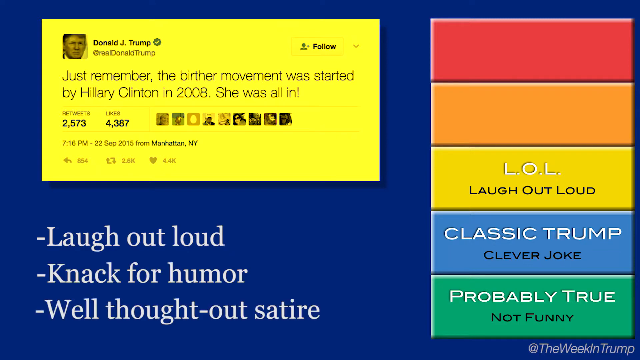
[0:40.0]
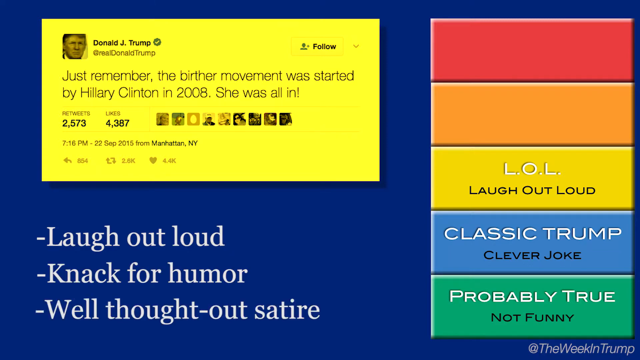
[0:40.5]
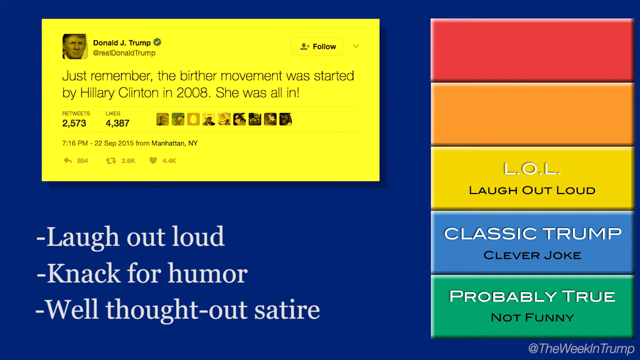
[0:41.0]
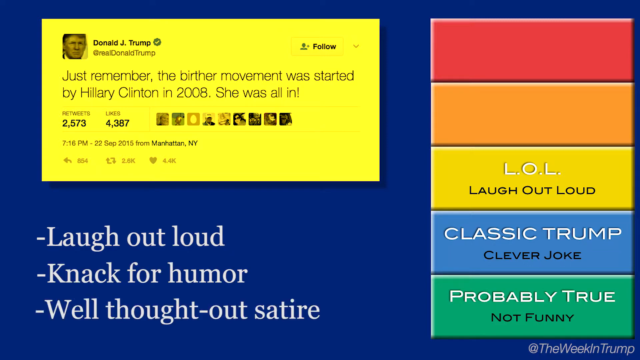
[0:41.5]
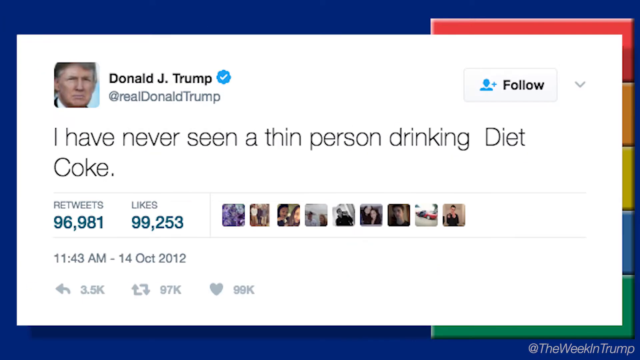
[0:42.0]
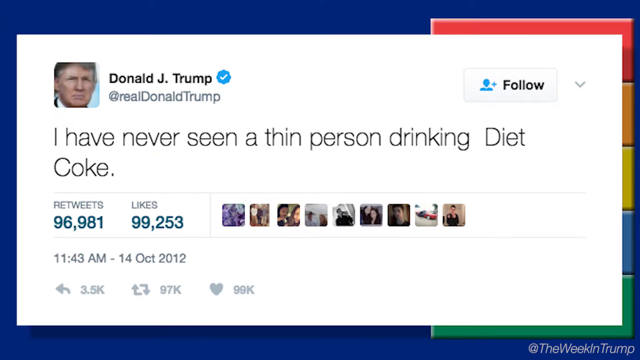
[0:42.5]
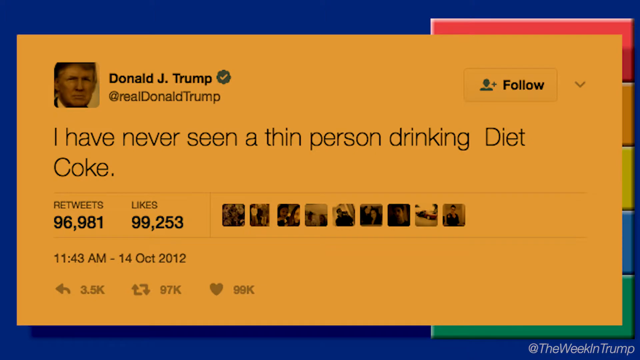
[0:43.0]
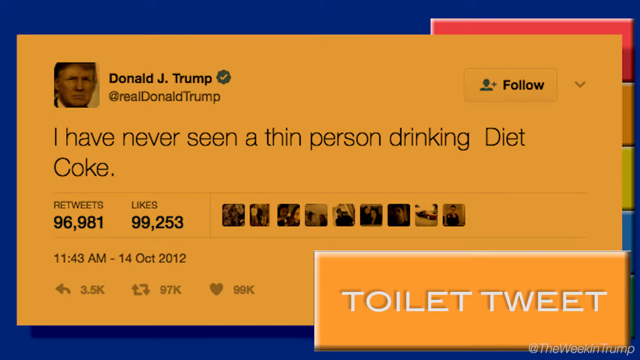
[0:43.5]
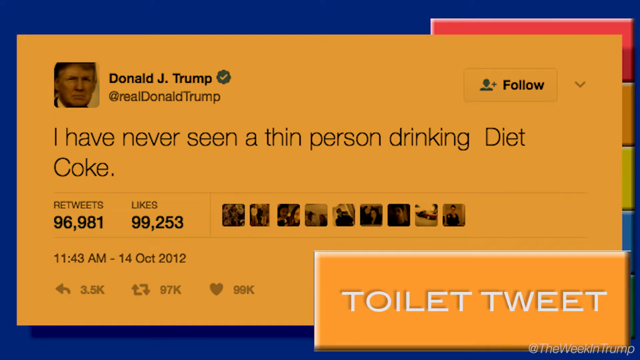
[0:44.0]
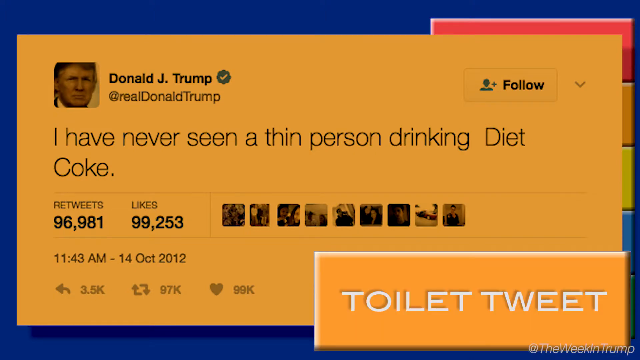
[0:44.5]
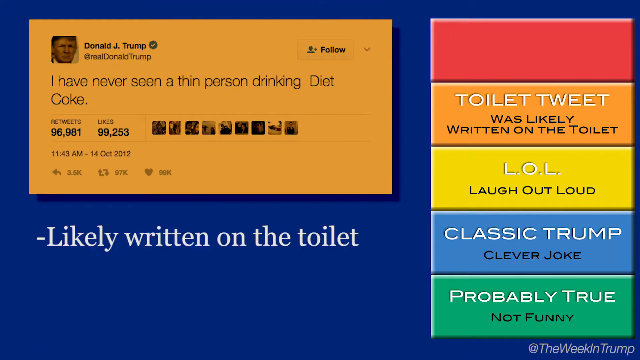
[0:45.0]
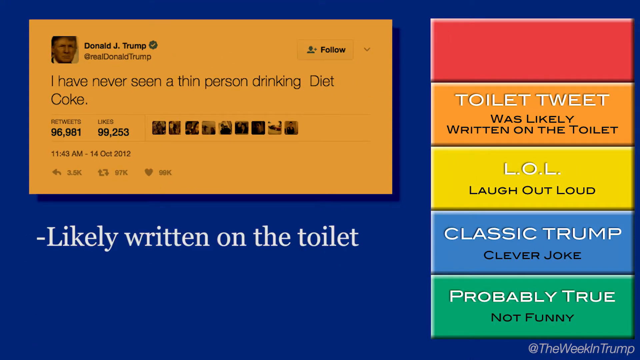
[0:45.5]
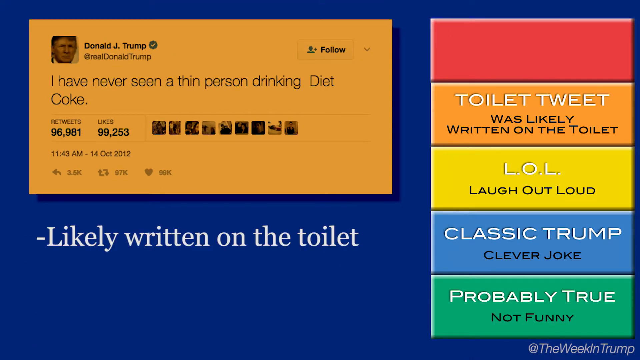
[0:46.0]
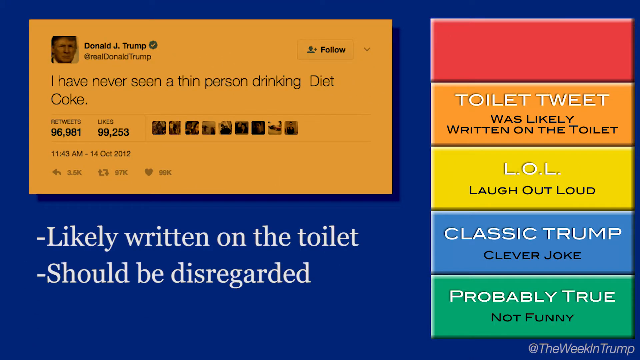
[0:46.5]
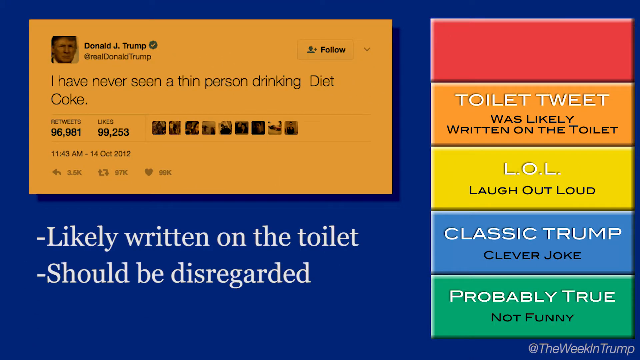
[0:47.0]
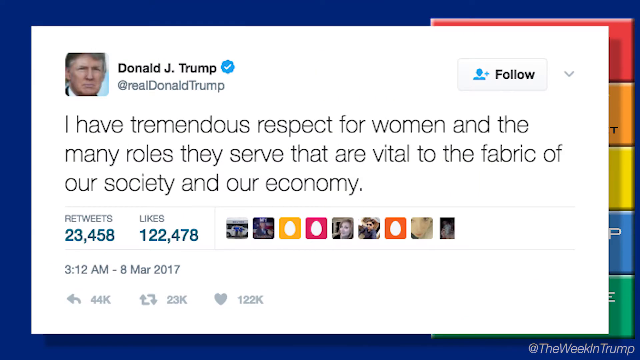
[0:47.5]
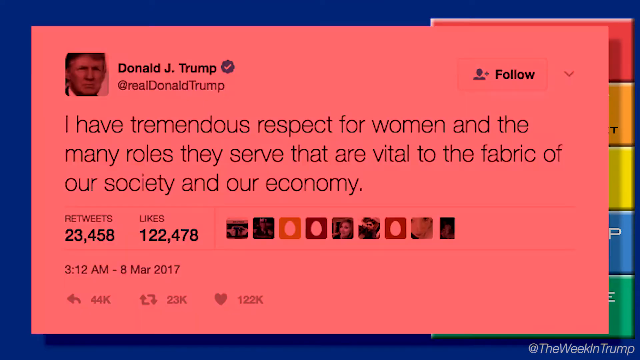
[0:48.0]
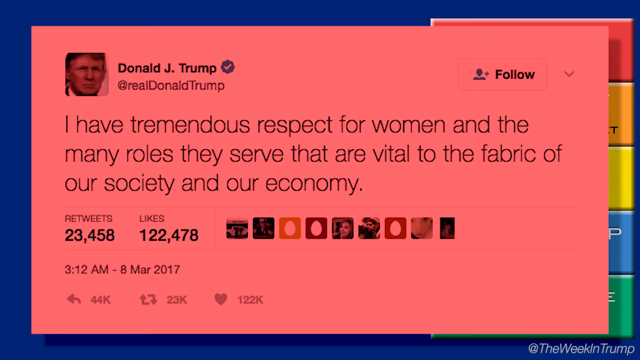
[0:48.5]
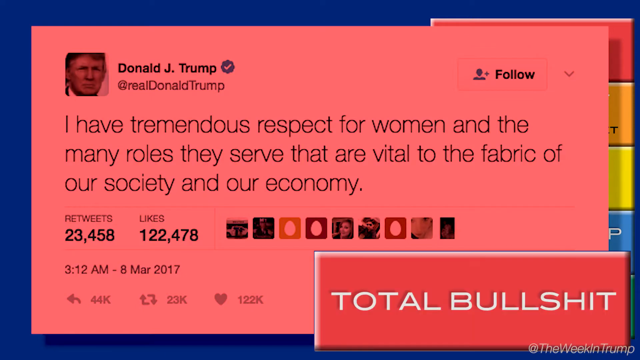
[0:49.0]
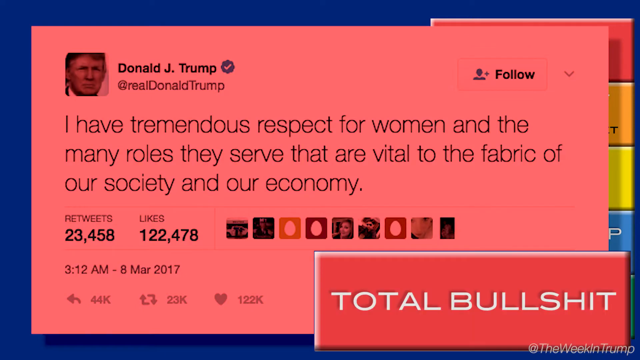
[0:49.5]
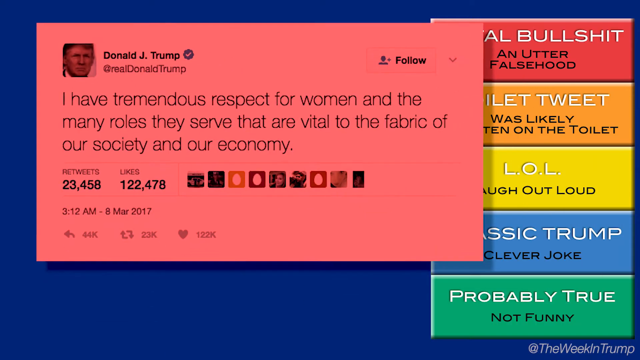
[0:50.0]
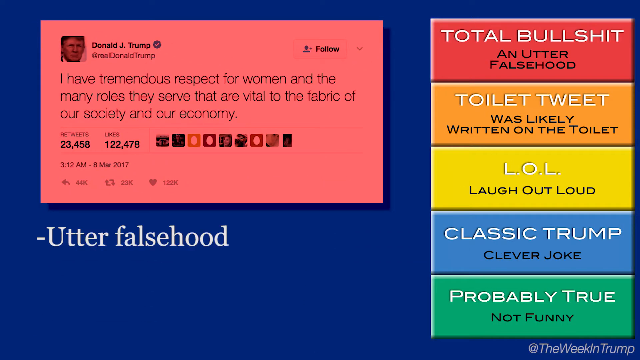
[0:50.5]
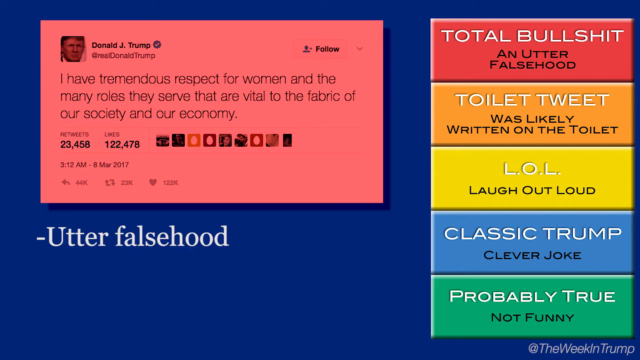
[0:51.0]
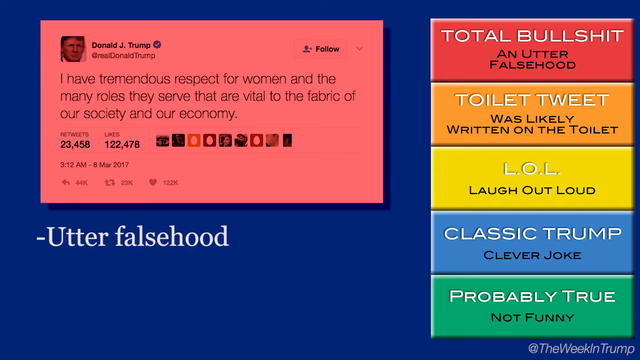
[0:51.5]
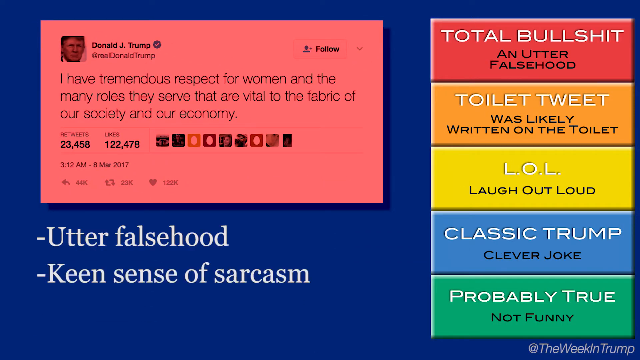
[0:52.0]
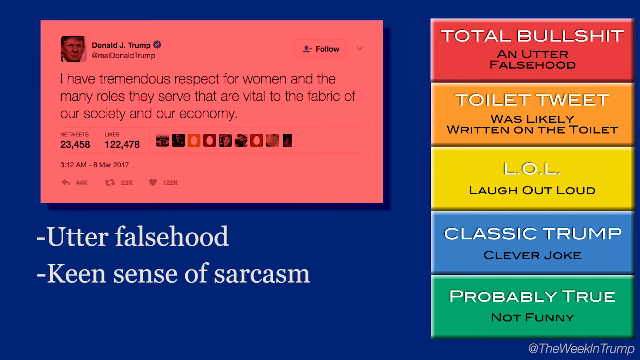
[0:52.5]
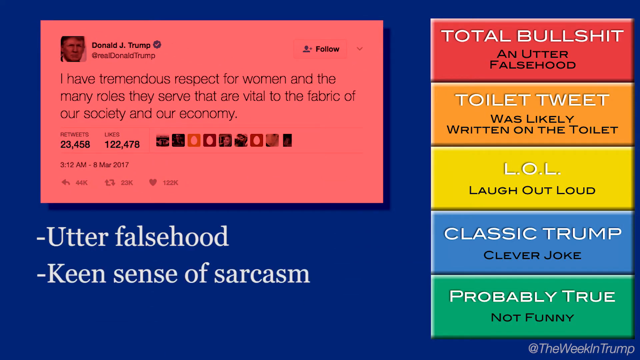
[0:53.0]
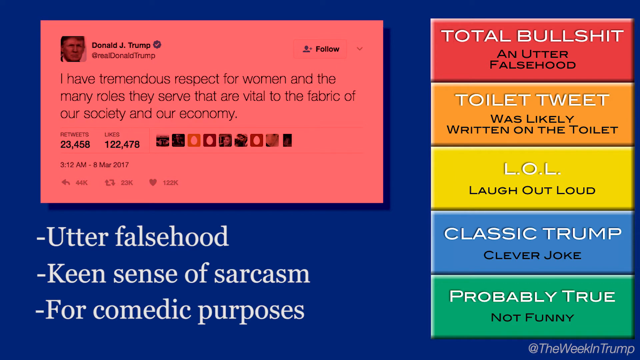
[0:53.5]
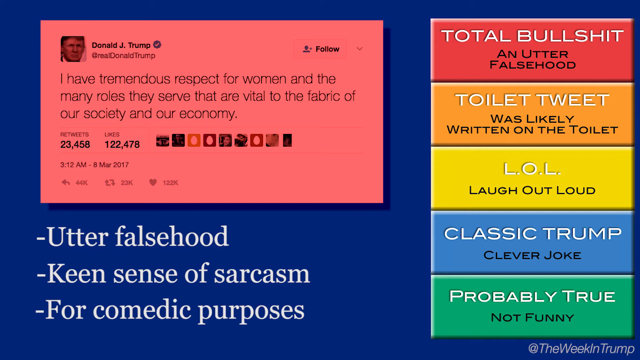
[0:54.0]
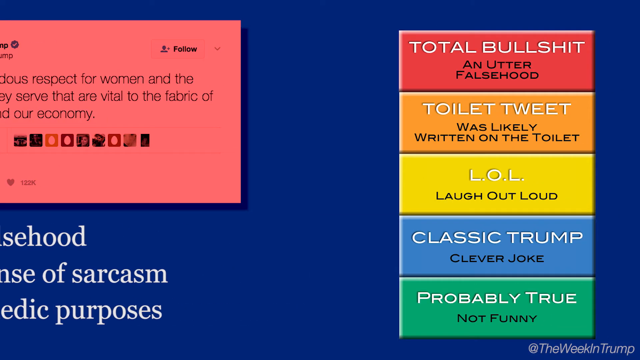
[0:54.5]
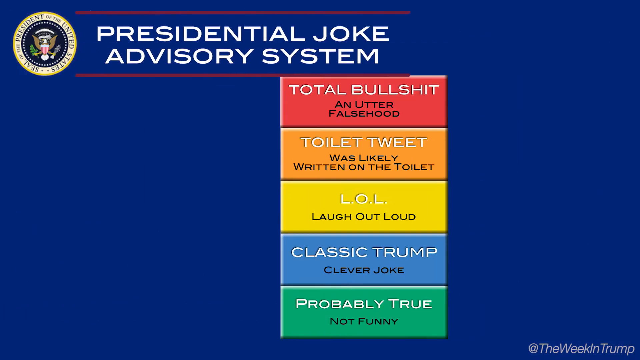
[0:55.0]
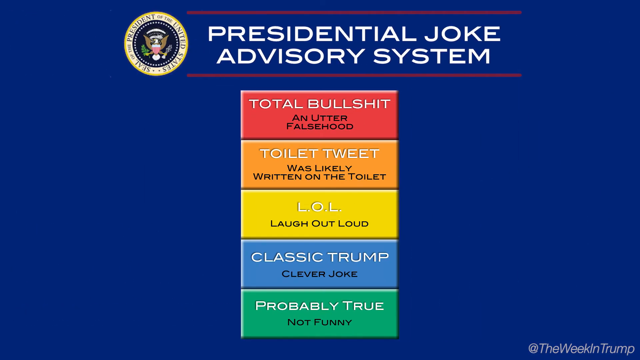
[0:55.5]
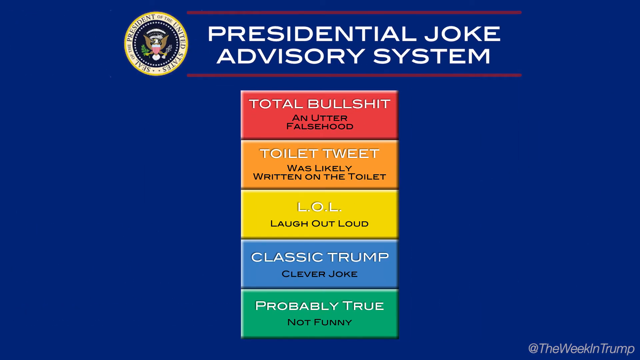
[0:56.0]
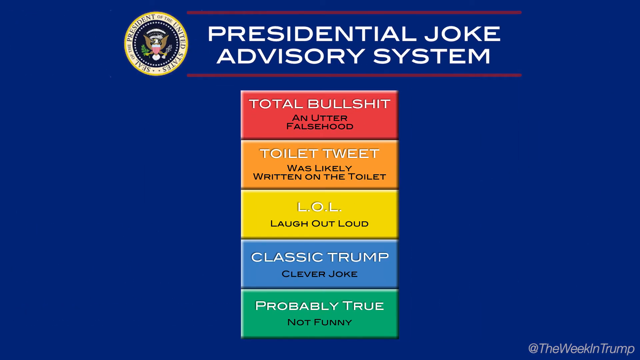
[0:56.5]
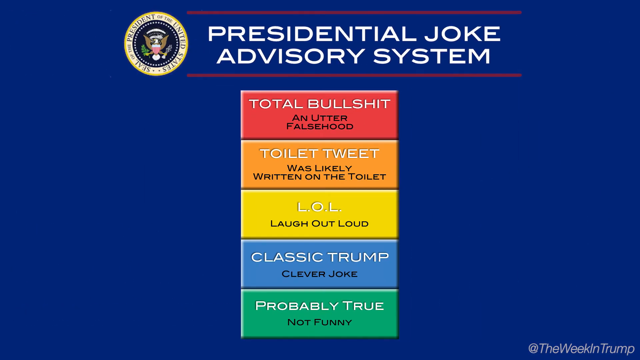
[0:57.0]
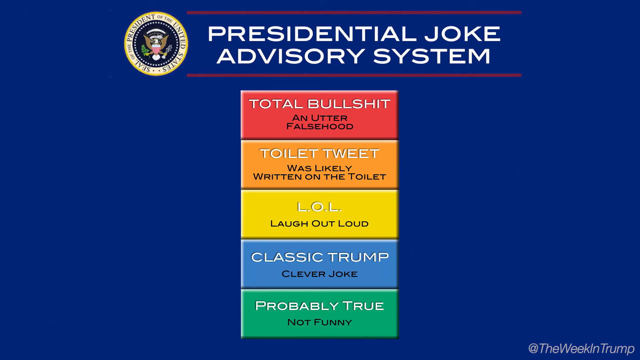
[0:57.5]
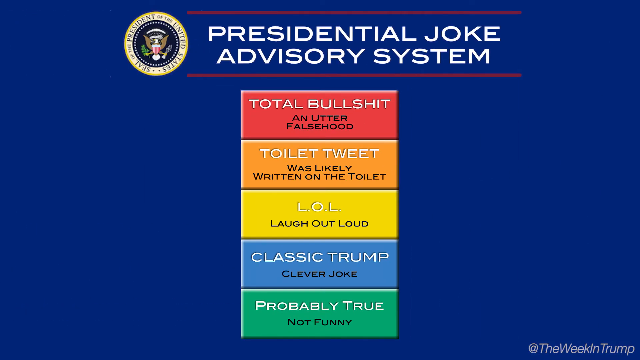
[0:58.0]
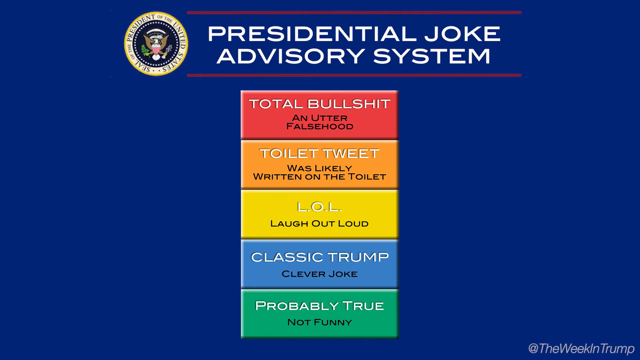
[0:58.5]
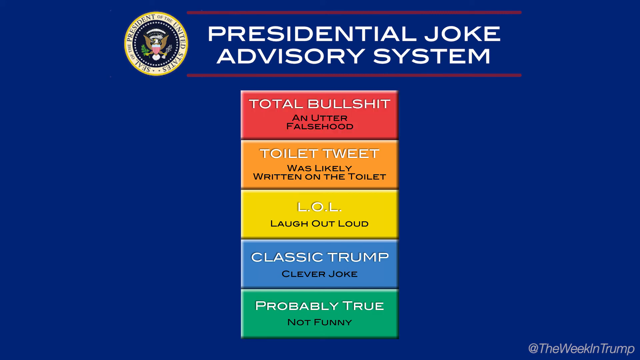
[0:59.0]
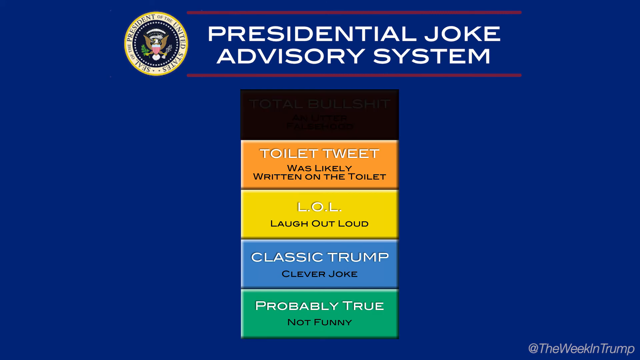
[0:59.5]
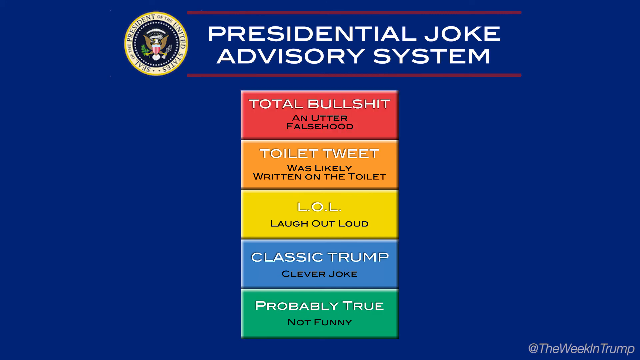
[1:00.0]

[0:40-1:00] Another Twitter post from Donald Trump appears, highlighted in orange, saying "I have never seen a thin person drinking Diet Coke." A box pops up at the bottom right that says "Toilet Tweet," then moves to the left side of the screen, with text underneath reading "likely written on the toilet, should be disregarded." Next, a Twitter post highlighted in red says "I have tremendous respect for women and the many roles they serve that are vital to the fabric of our society and our economy." A small box appears at the bottom right that says "total bullshit," with text underneath reading "utter falsehood, keen sense of sarcasm for comedic purposes." Finally, one large screen with a blue background shows the rainbow boxes in order, going from "probably true" to "classic Trump" to "LOL" to "toilet tweet" to "total bullshit."